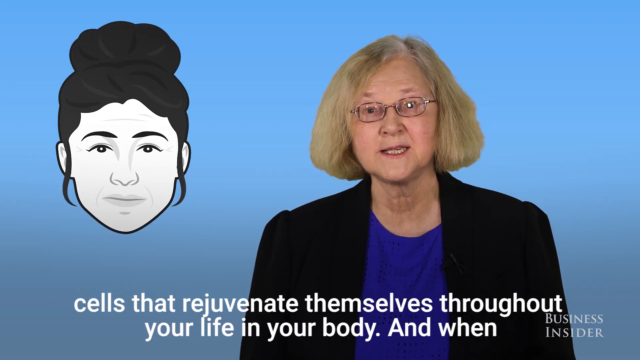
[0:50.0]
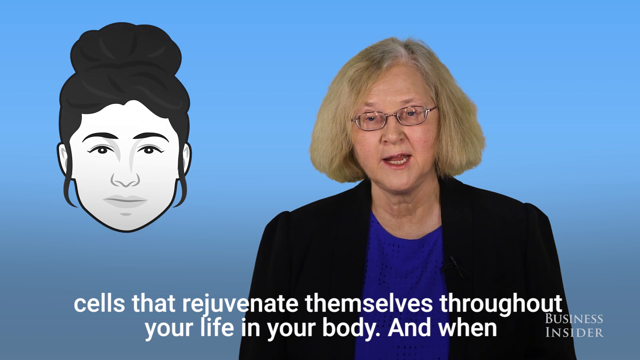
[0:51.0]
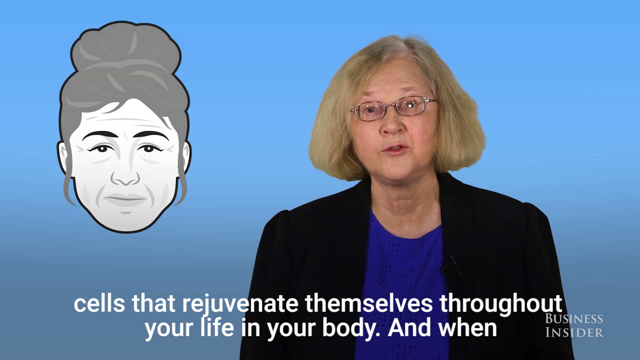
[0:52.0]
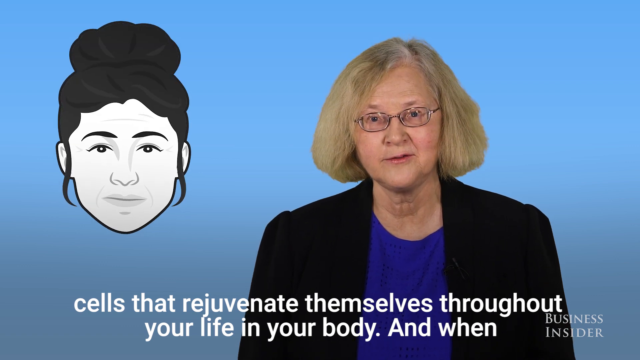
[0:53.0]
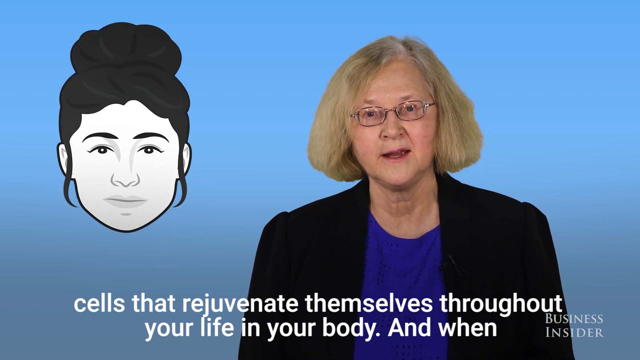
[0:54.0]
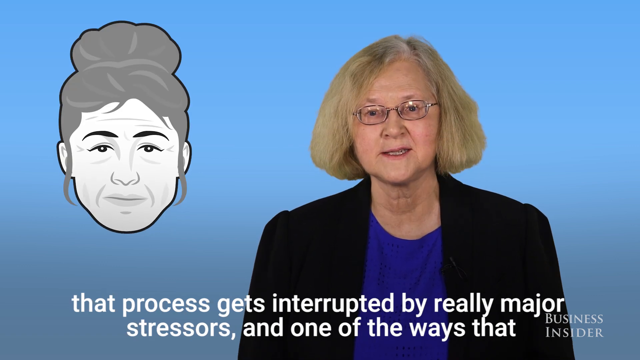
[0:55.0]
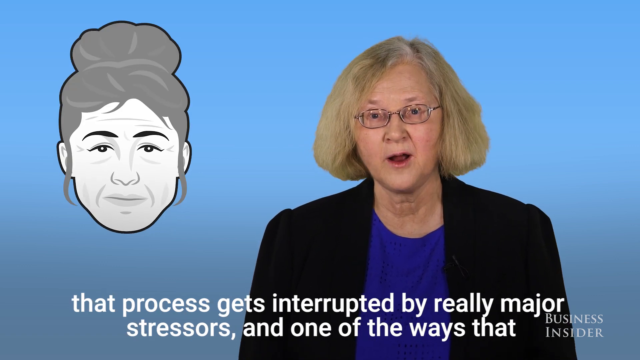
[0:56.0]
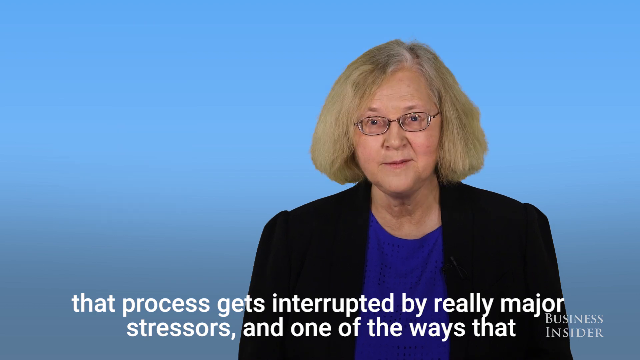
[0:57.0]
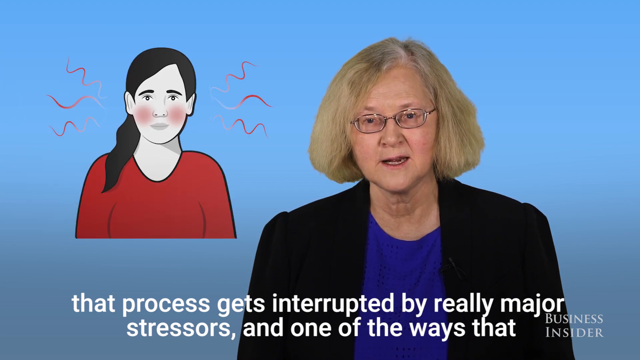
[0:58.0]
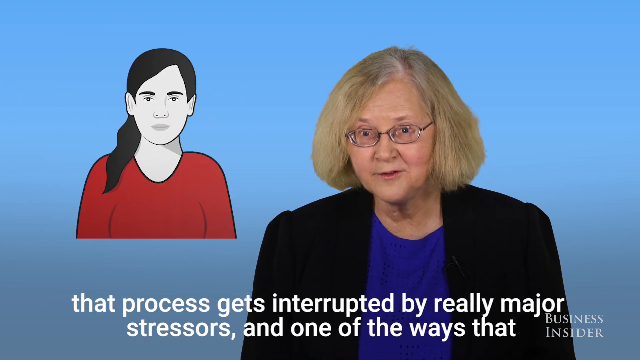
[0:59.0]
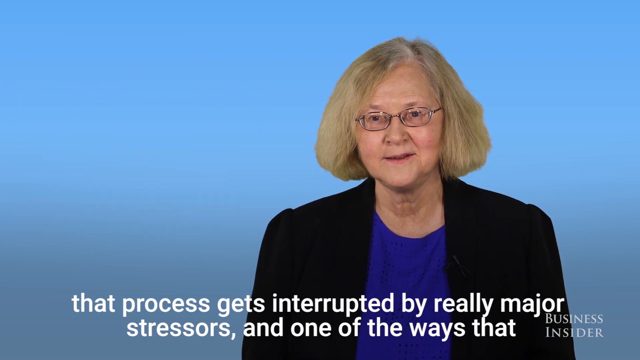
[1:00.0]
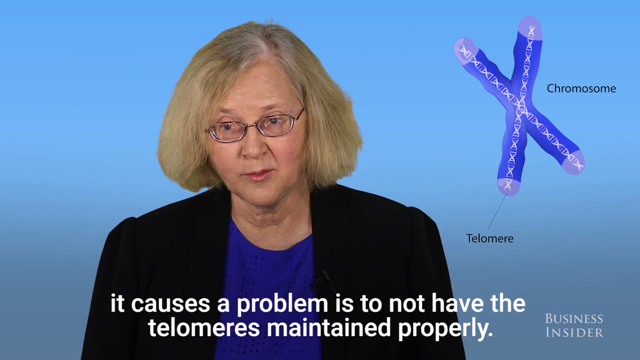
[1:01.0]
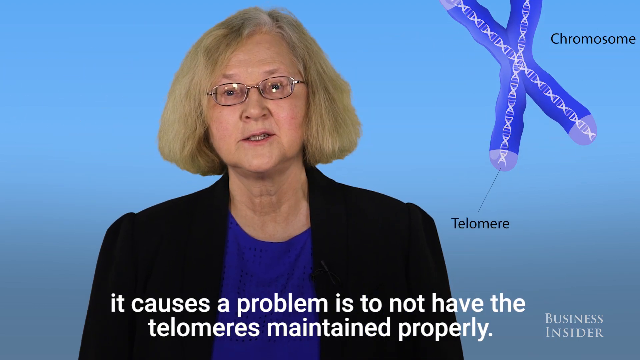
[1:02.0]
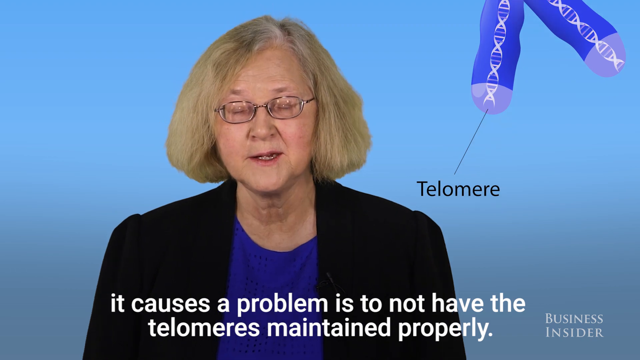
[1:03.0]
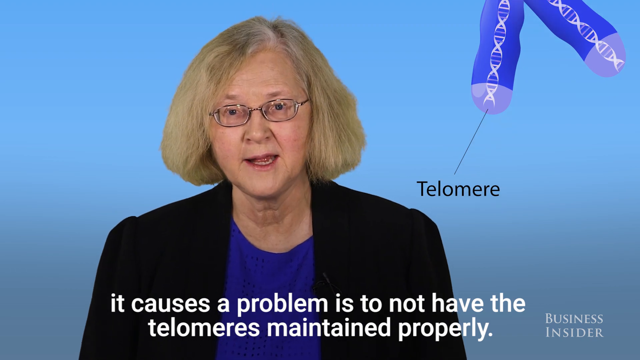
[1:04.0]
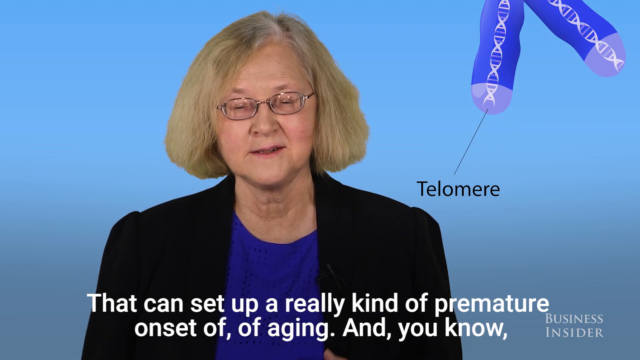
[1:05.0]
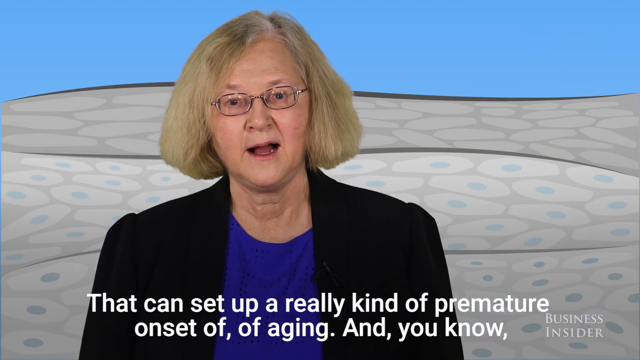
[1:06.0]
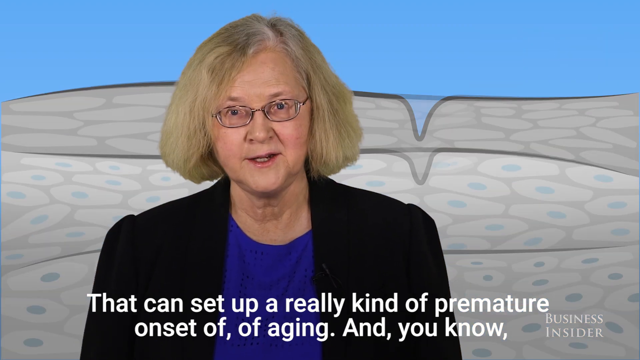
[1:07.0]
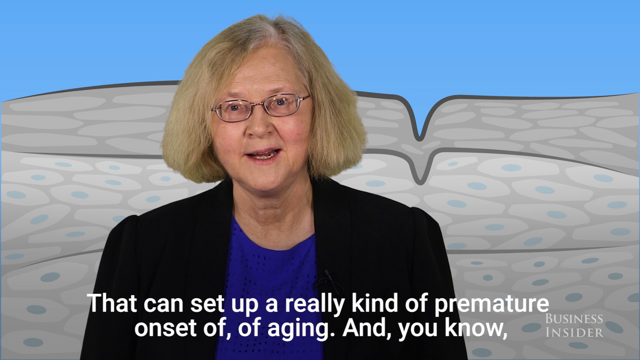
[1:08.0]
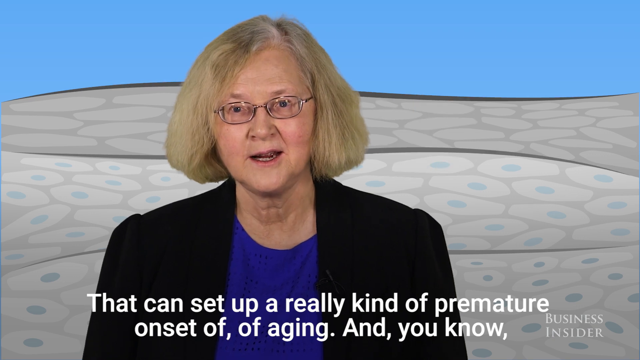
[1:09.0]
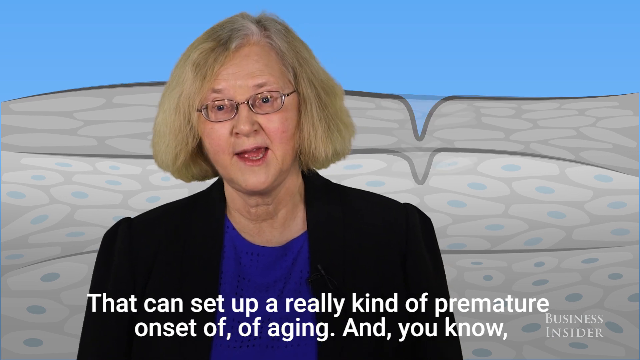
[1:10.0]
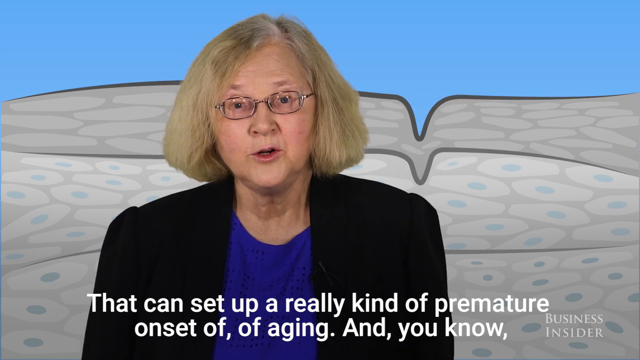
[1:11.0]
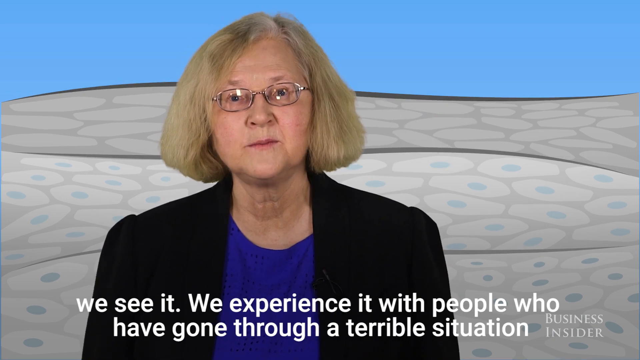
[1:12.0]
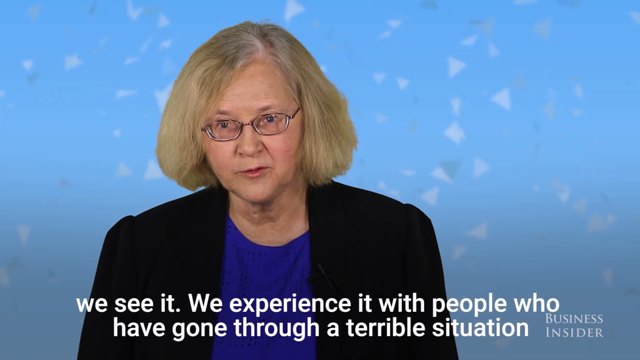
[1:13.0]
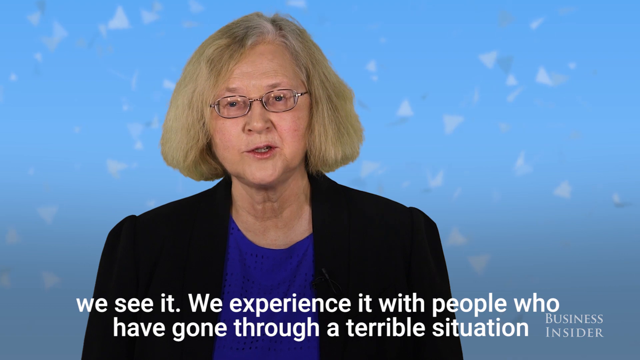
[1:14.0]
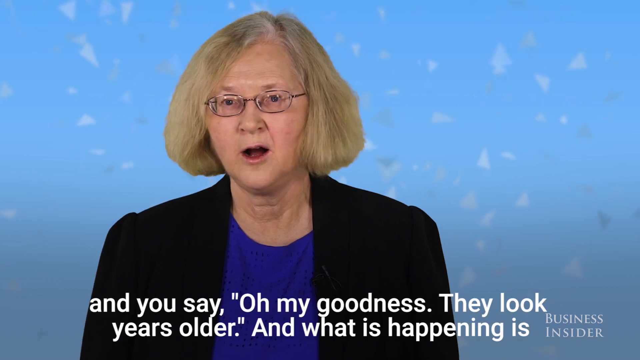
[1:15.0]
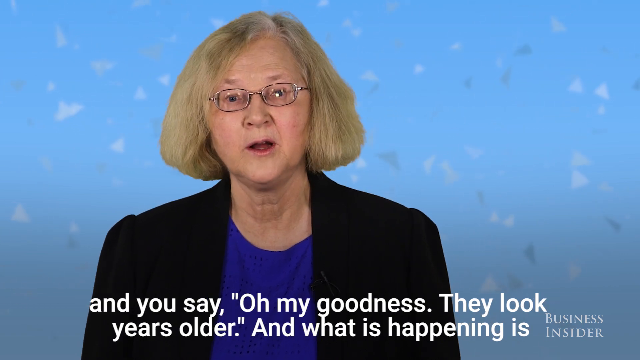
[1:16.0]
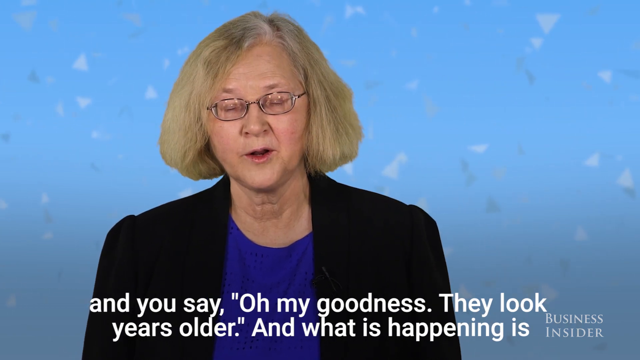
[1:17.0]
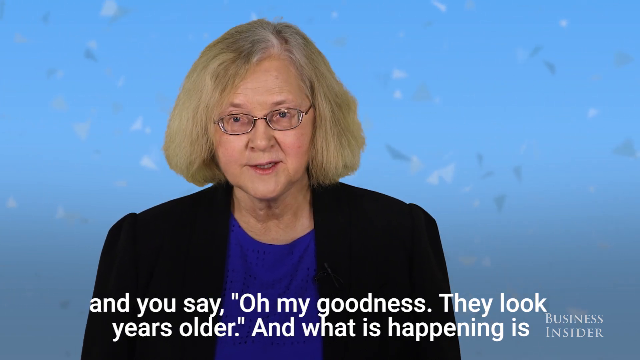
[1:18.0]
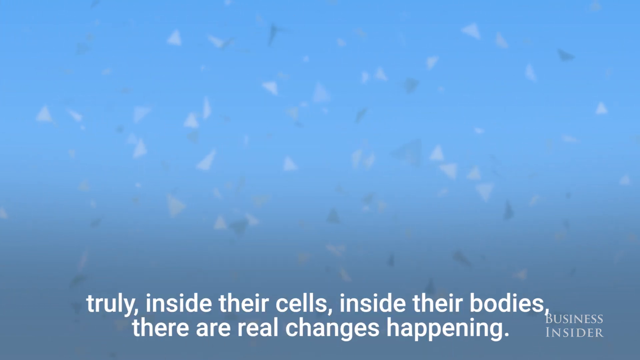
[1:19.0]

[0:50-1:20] On the right side of the screen is the narrator, the woman with short blonde hair, small glasses, a blue shirt and a black jacket, against a blue background. On the left-hand side is a drawing of a young woman with dark hair piled on her head, which periodically turns gray. The caption reads, "cells that rejuvenate themselves. throughout your life in your body and when that process gets interrupted by really major stressors. And one of the ways that it causes a problem is to not have the telomeres maintained properly." A drawing of a telomere appears behind the woman. The caption continues, "and that can set up a really kind of premature onset of aging. And you know, we see it. We experience it with people who have gone through a terrible situation, and you say, oh my goodness, they look years older. And what is happening is, truly inside their cells, inside their body." The background behind the woman changes to an illustration of a telomere and then a drawing of the skin surface of cells.